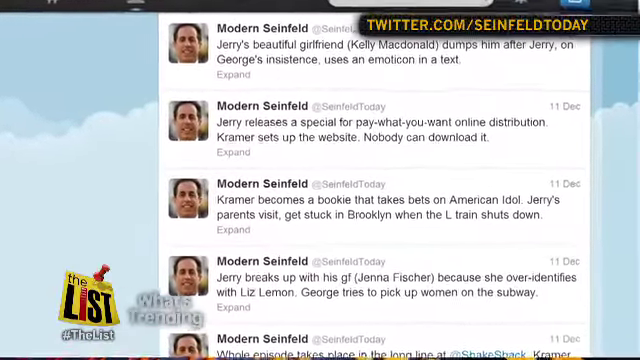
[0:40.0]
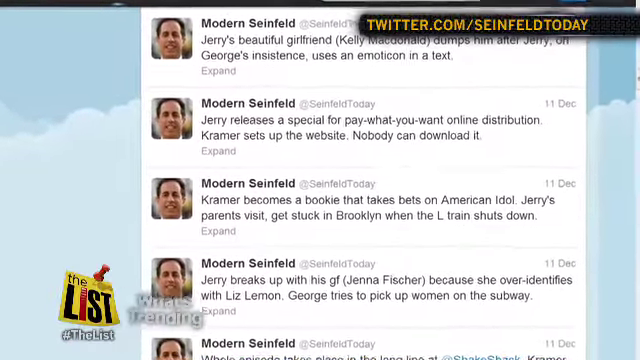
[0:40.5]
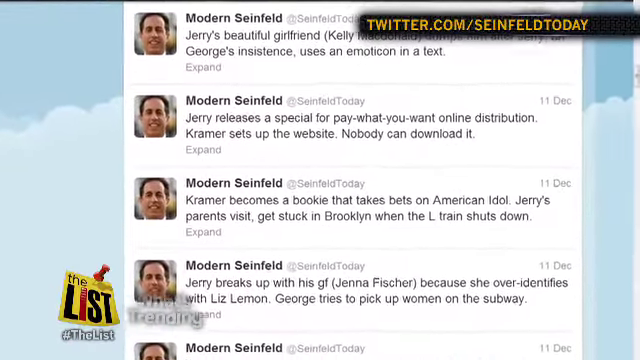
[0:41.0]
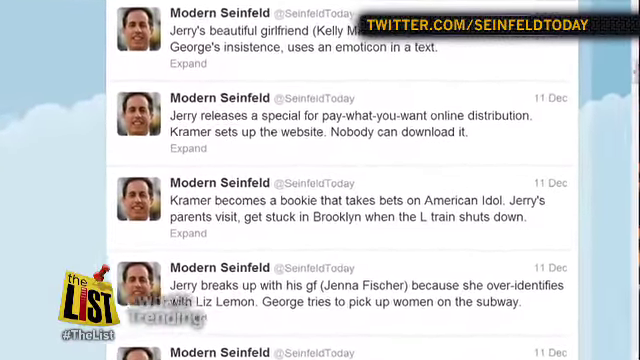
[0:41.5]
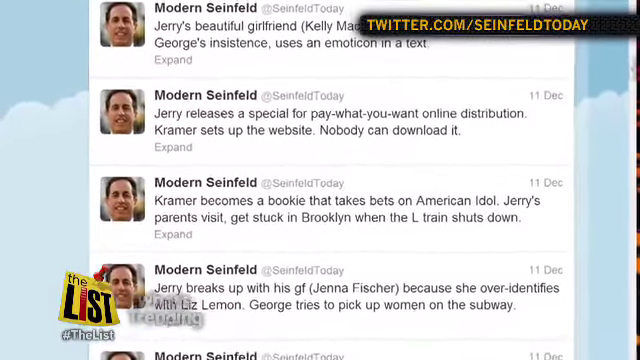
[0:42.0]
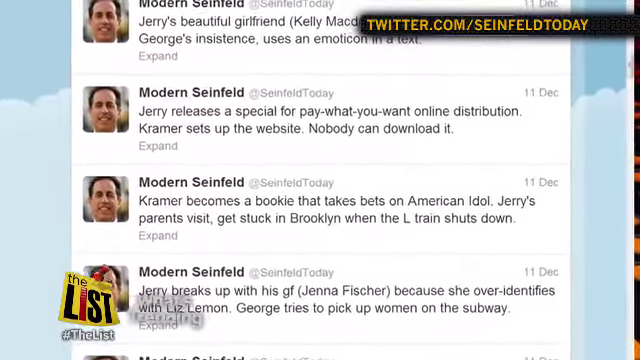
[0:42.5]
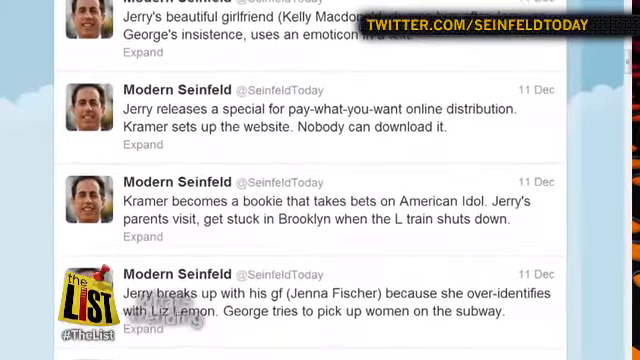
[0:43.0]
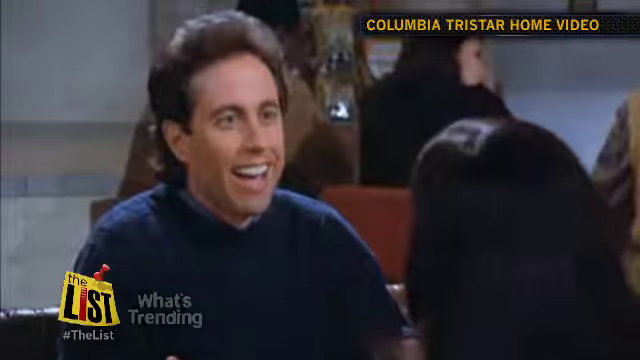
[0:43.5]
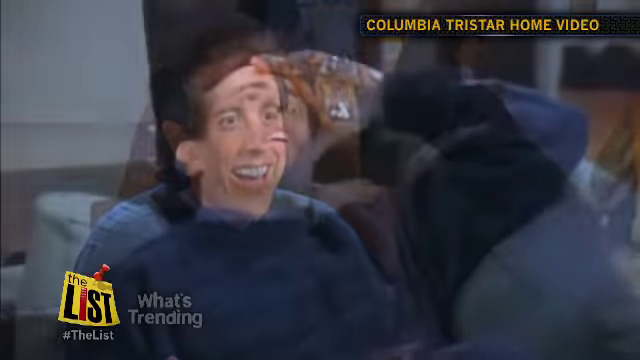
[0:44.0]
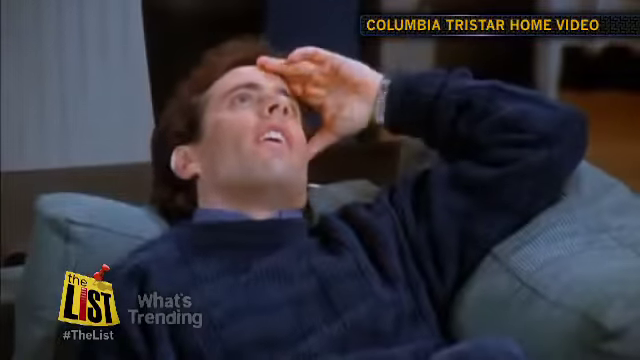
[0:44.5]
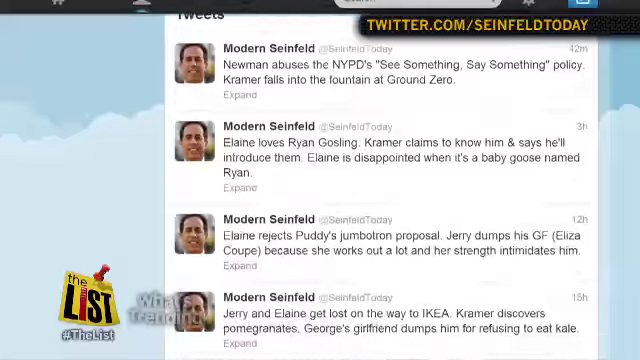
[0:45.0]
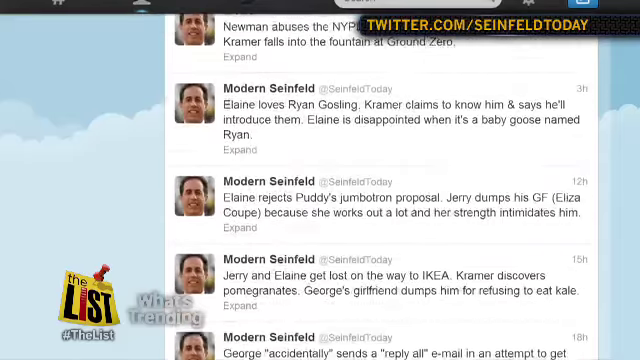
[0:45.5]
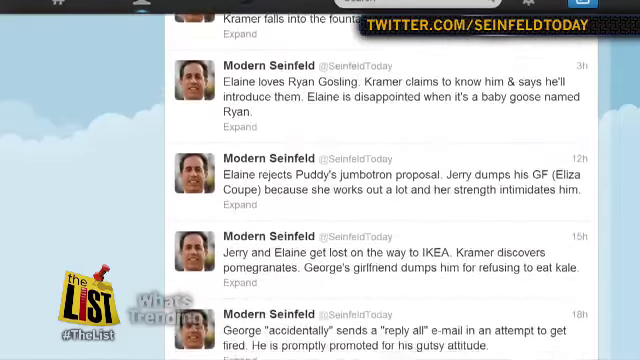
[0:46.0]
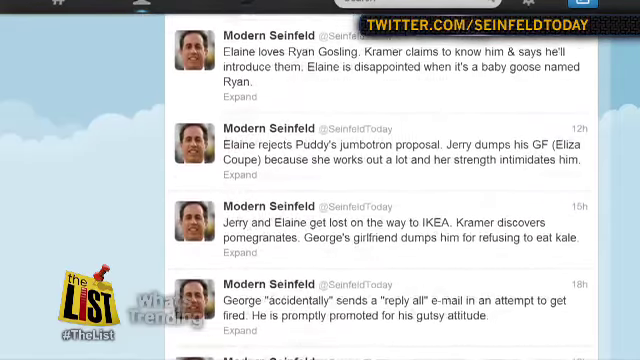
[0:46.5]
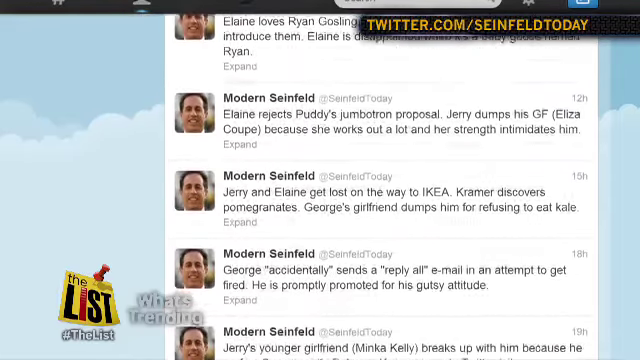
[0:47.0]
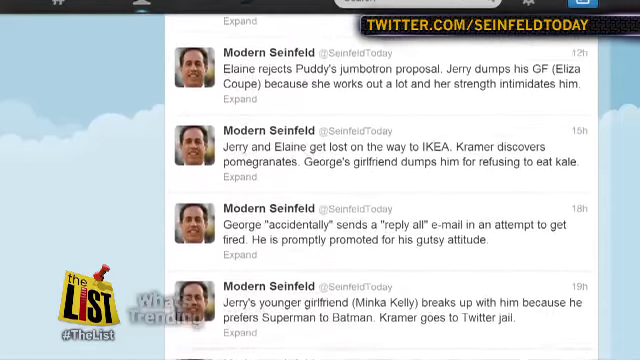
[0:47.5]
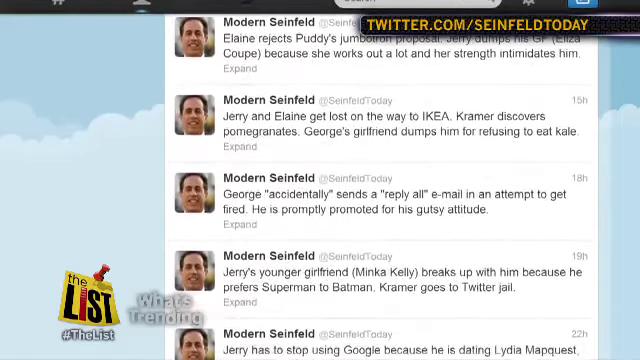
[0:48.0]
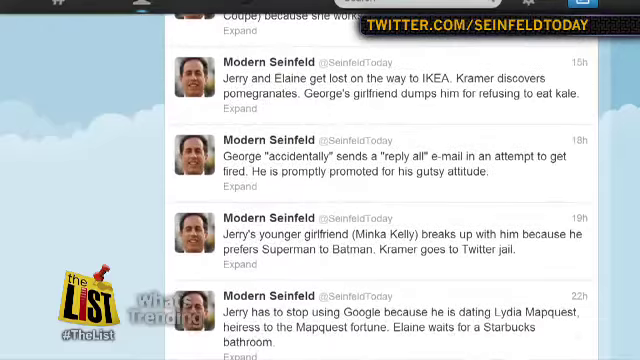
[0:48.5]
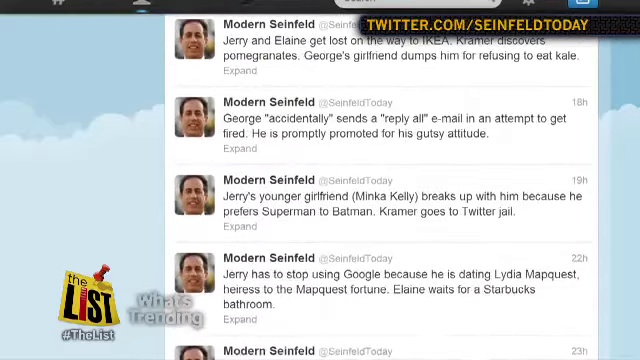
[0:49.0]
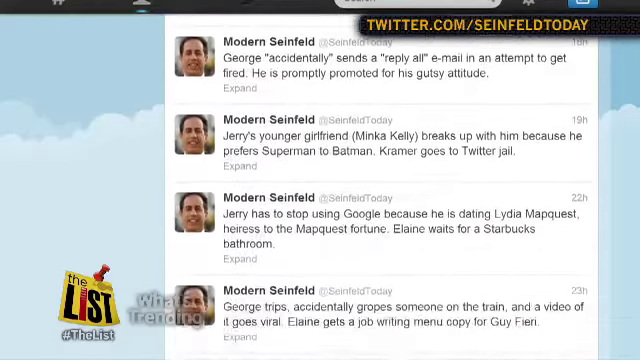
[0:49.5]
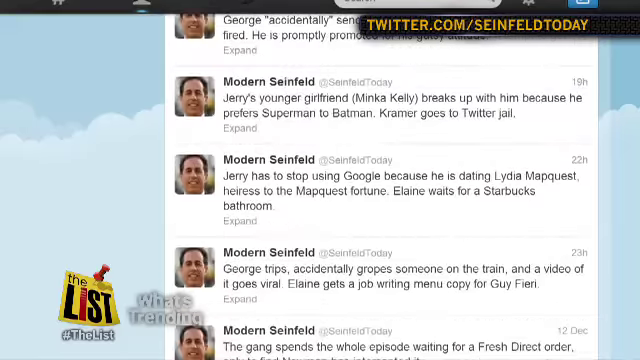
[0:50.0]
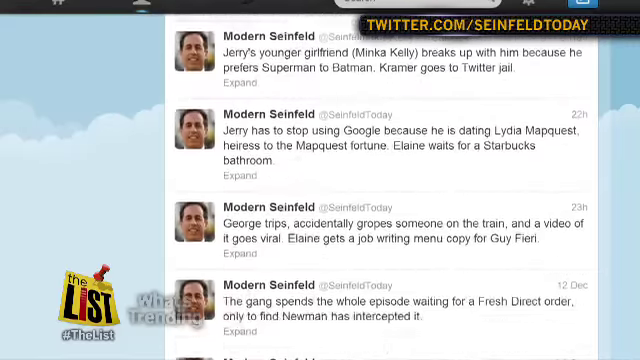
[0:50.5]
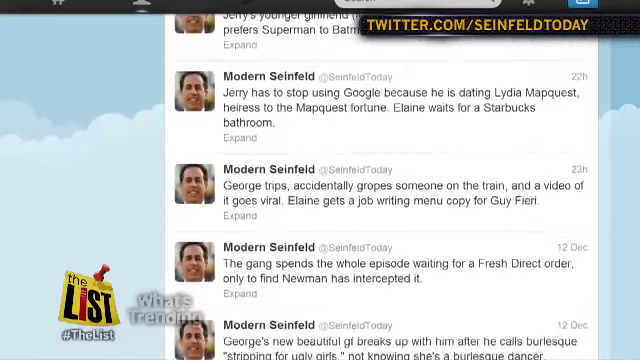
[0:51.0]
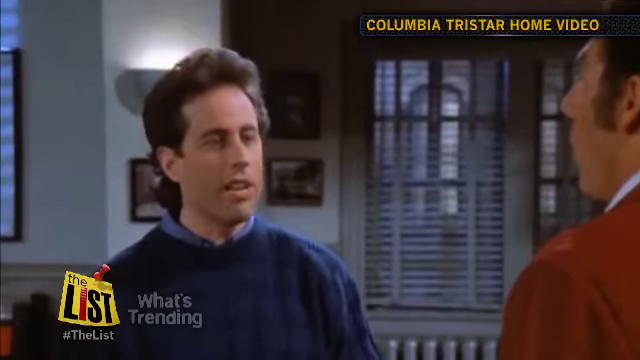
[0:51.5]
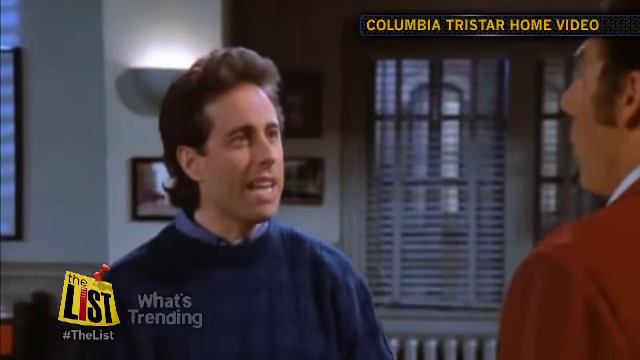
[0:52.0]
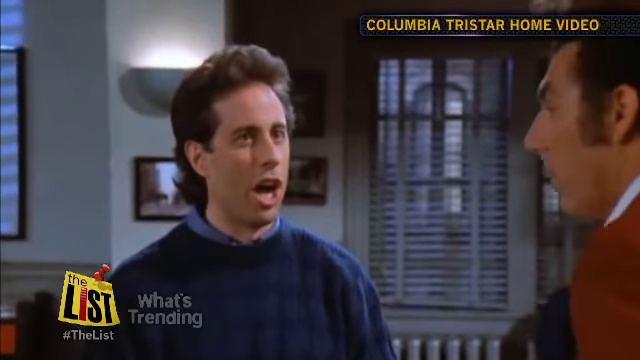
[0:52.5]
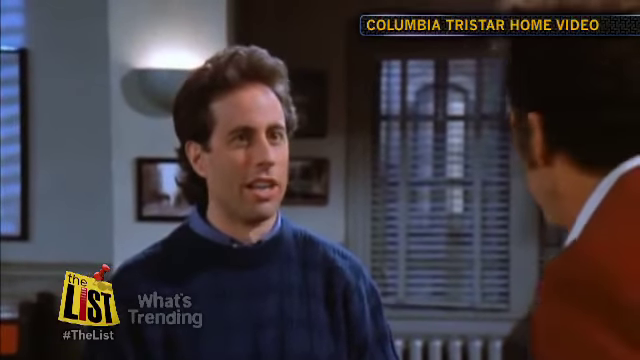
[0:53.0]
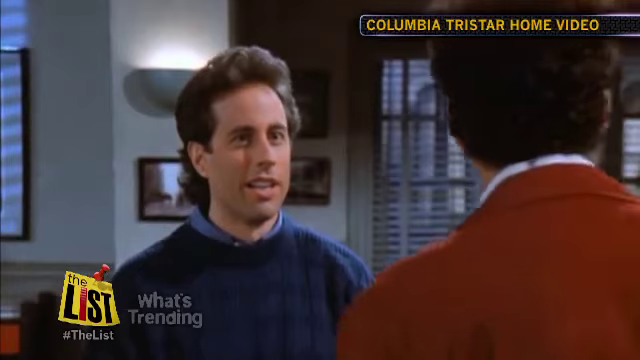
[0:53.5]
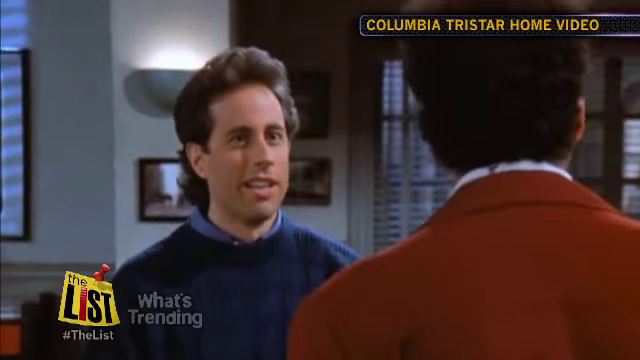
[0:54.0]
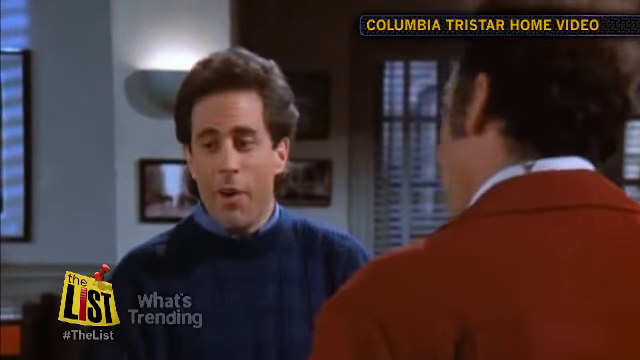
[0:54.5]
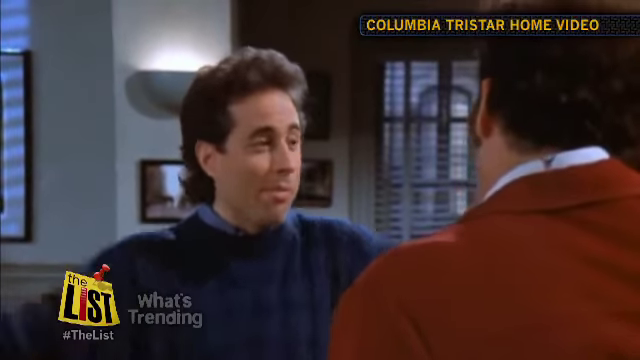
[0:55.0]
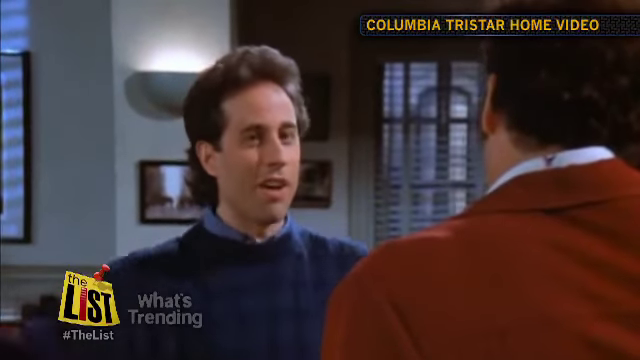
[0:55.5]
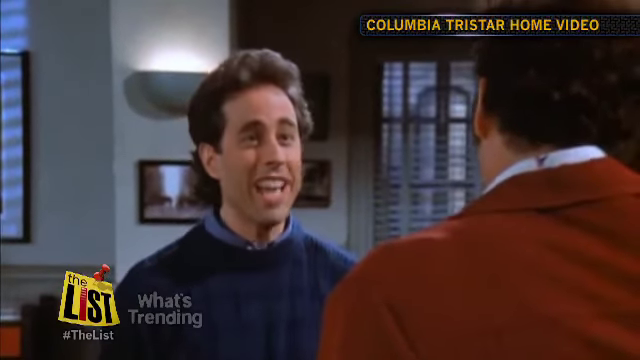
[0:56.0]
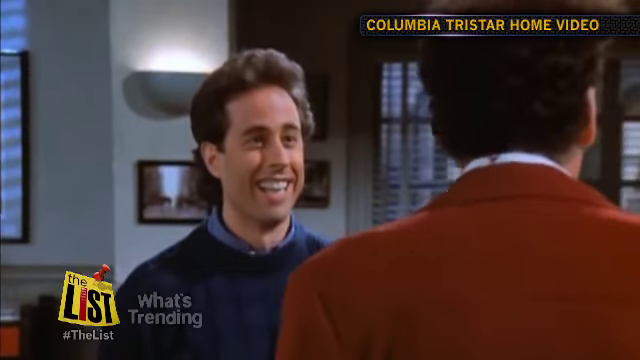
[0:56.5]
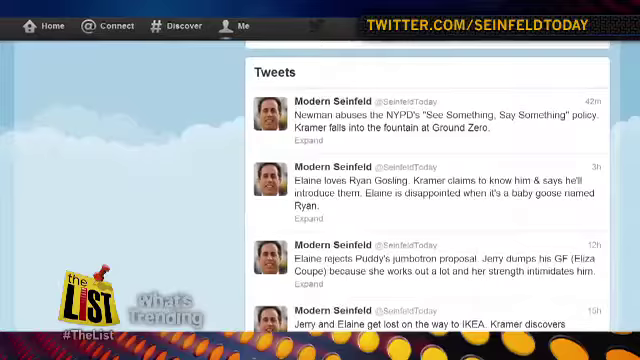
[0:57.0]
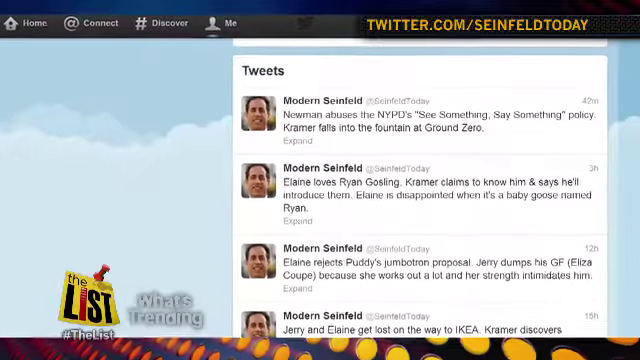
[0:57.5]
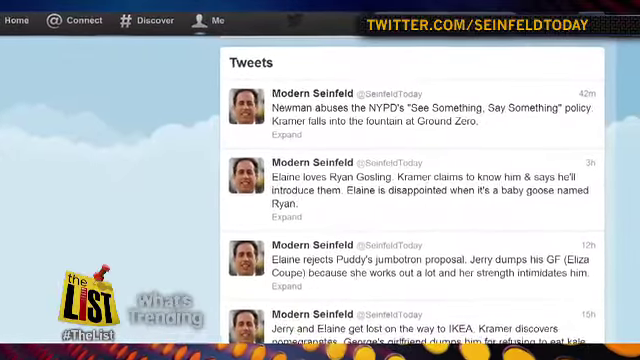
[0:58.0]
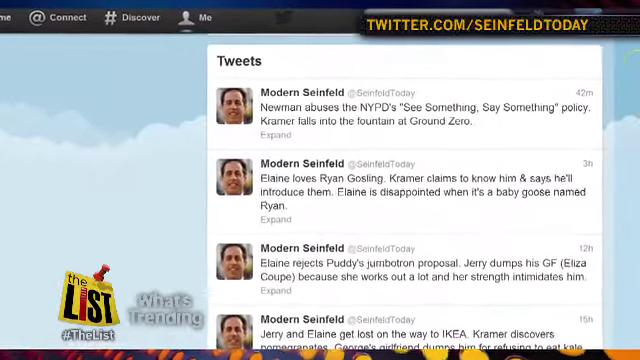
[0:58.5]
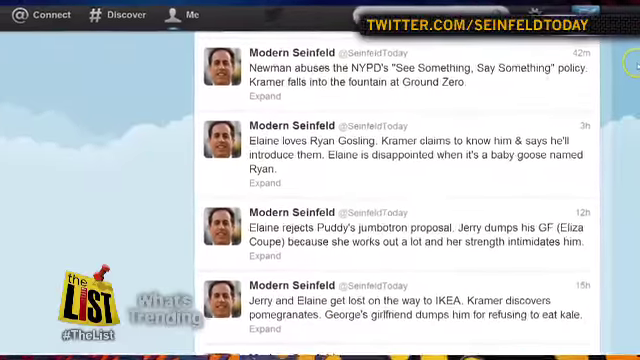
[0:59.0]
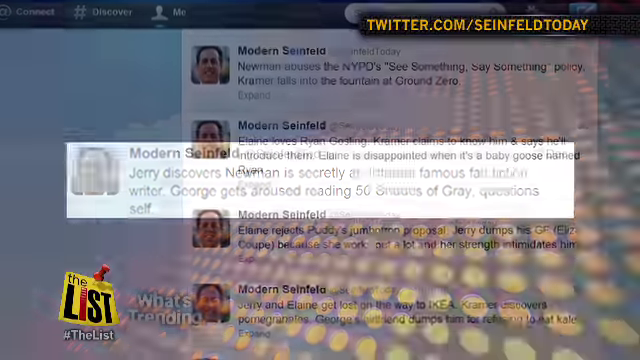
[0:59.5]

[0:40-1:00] More tweets appear, including "Kramer becomes a bookie that takes bets on American Idol" and one about Jerry's parents getting stuck in Brooklyn when the L train shuts down. The view zooms in, and a man is seen sitting, looking frustrated. The two men are still arguing; one wears a red blazer and the other a blue blazer with a blue t-shirt. One of them is apparently arguing with a girl, and the other seems very annoyed with him, seeming to walk away and look in the other direction, while the man who was arguing scoffs. The video returns to the tweets.